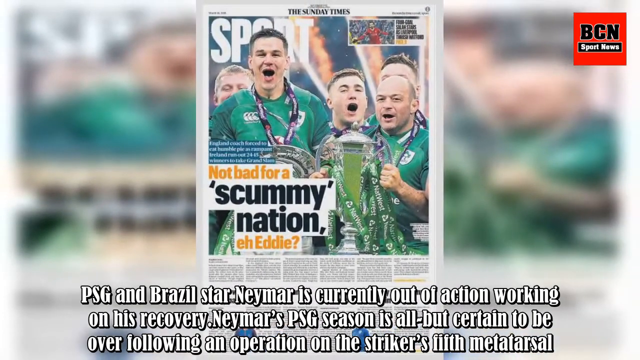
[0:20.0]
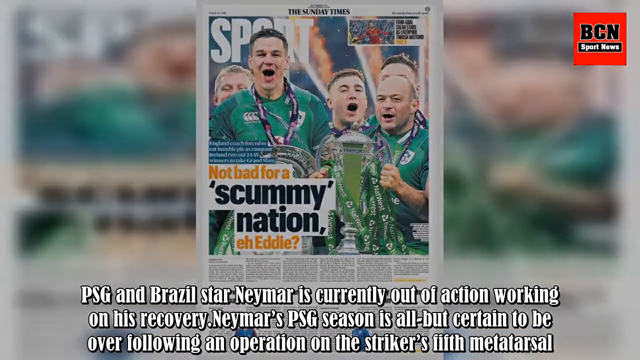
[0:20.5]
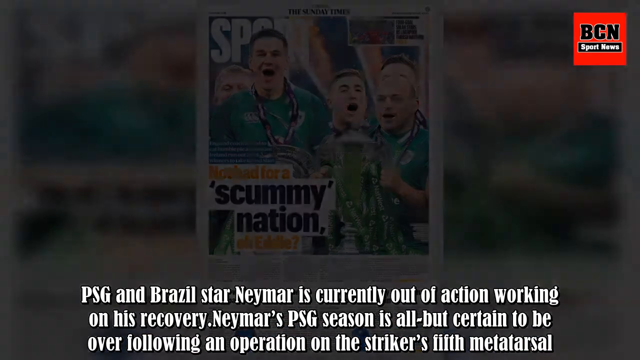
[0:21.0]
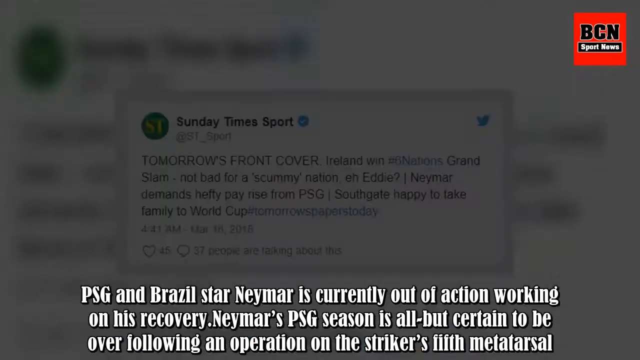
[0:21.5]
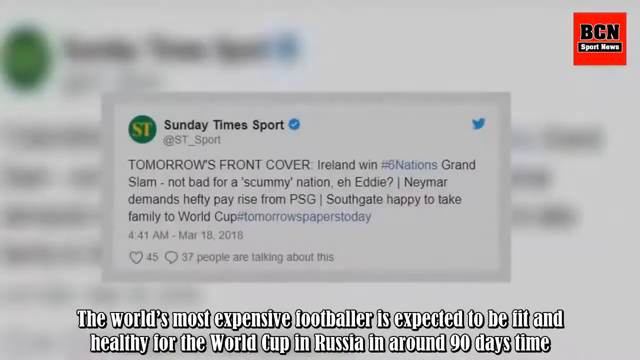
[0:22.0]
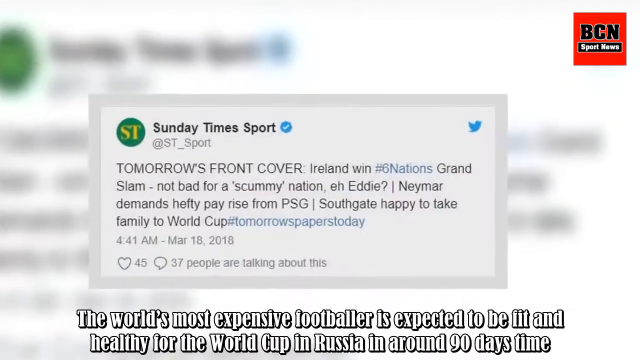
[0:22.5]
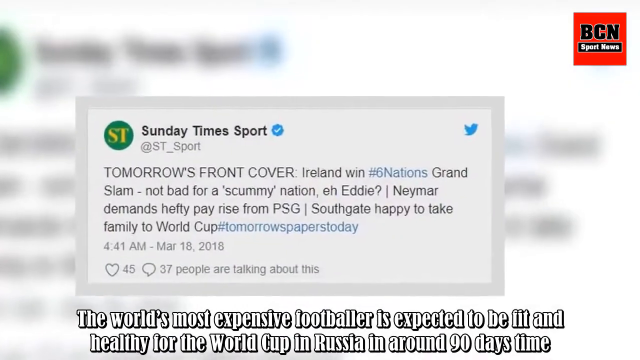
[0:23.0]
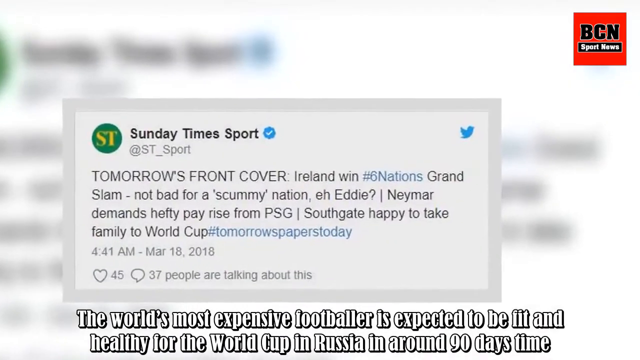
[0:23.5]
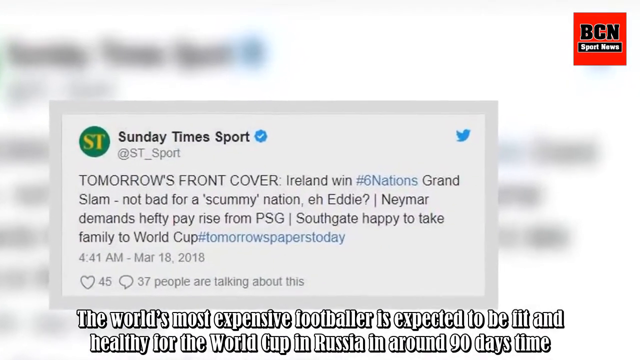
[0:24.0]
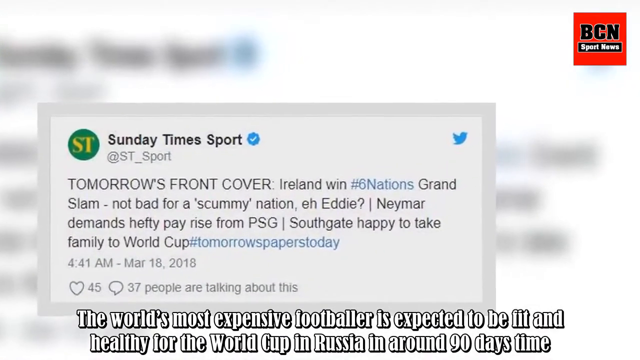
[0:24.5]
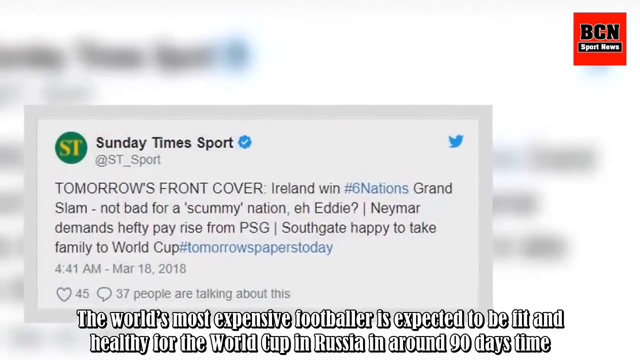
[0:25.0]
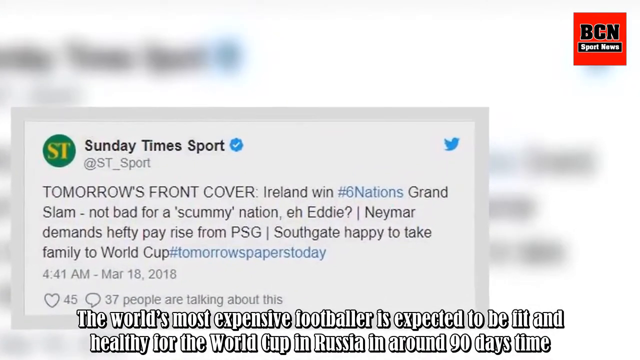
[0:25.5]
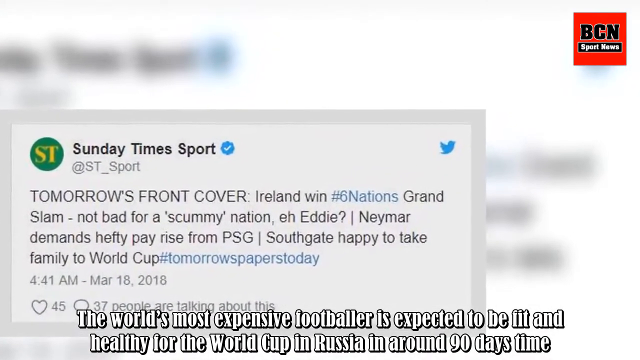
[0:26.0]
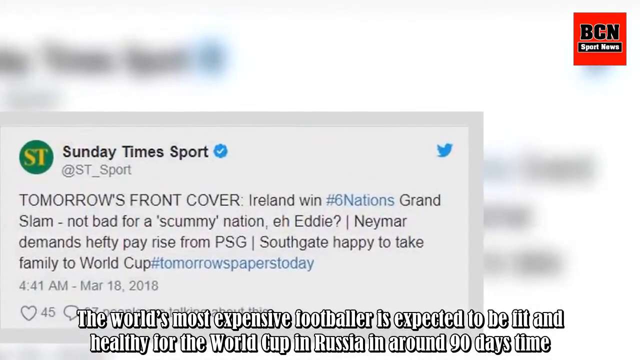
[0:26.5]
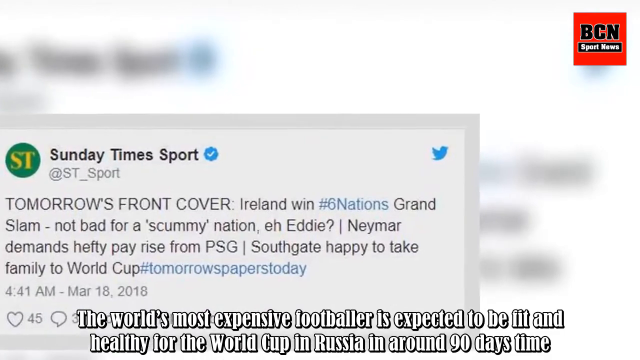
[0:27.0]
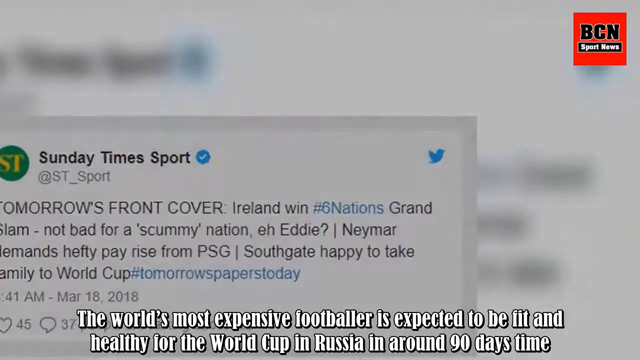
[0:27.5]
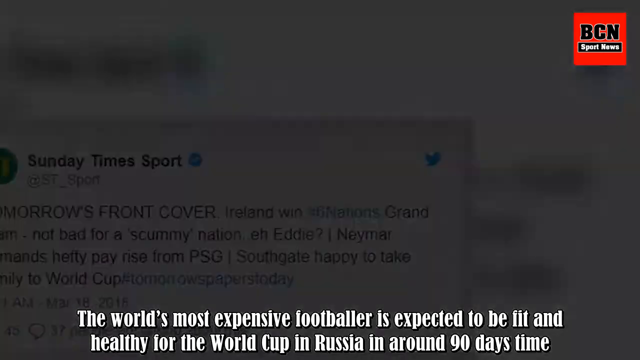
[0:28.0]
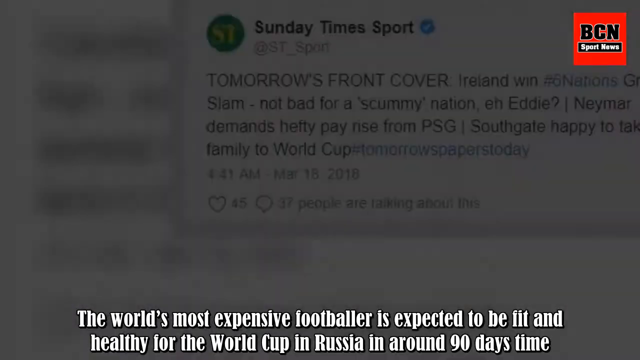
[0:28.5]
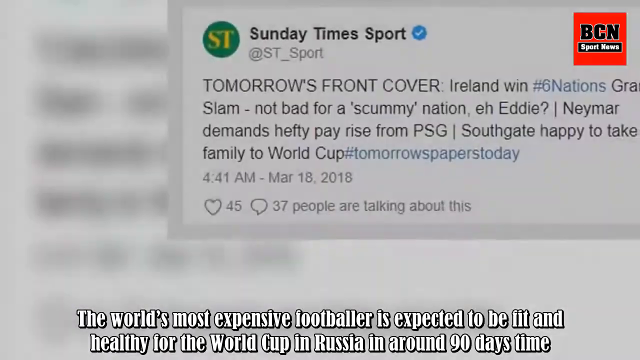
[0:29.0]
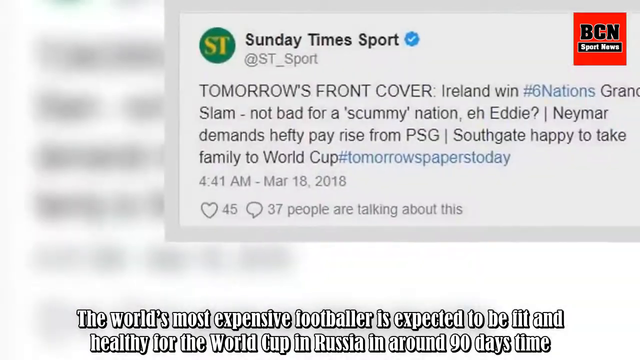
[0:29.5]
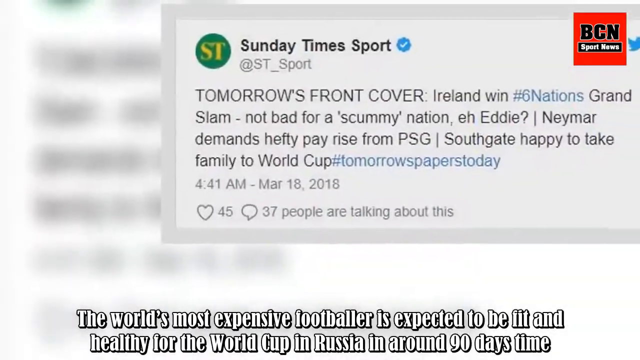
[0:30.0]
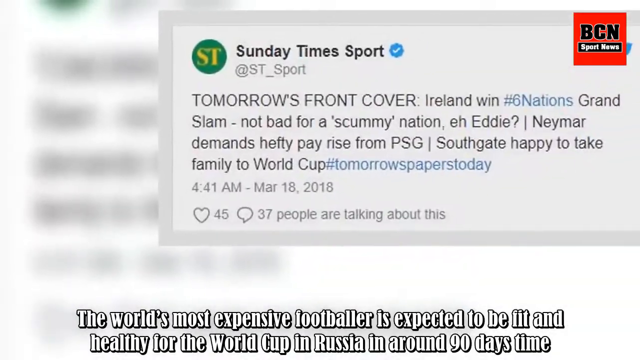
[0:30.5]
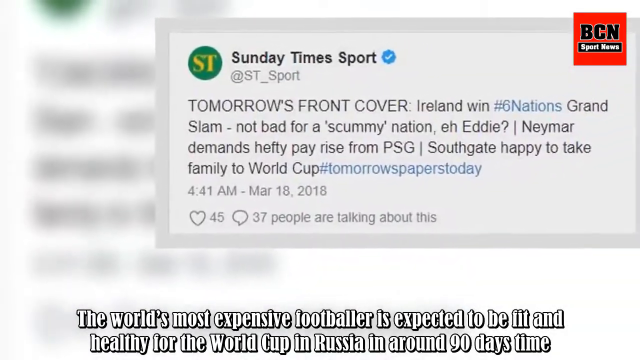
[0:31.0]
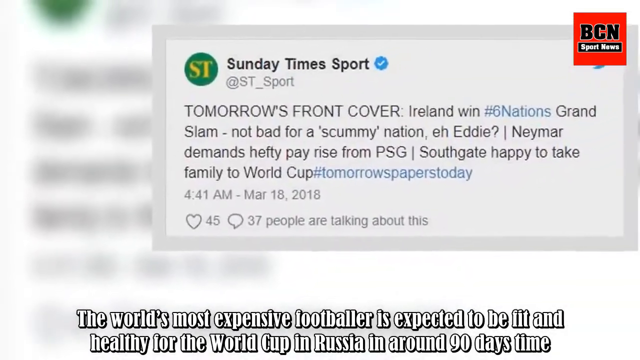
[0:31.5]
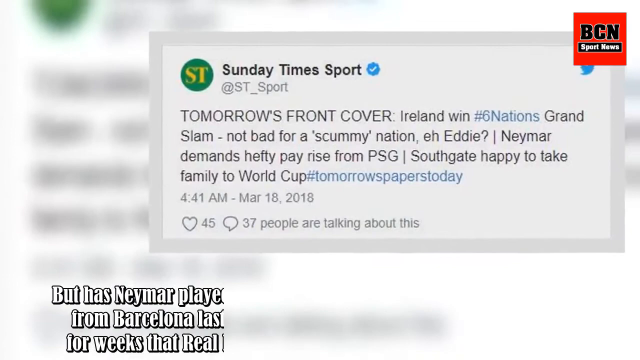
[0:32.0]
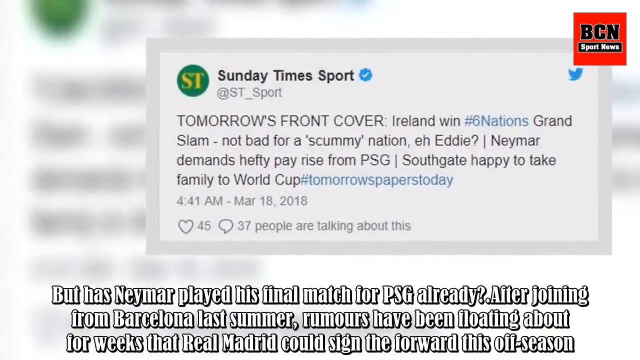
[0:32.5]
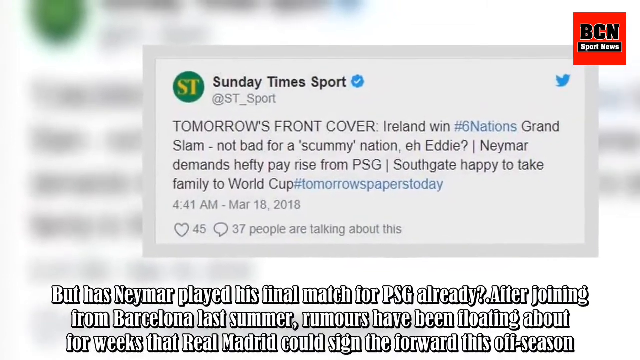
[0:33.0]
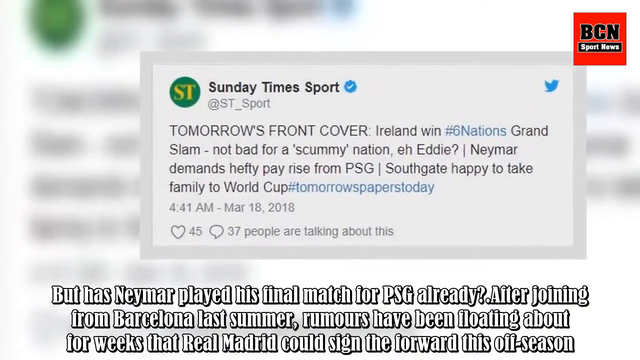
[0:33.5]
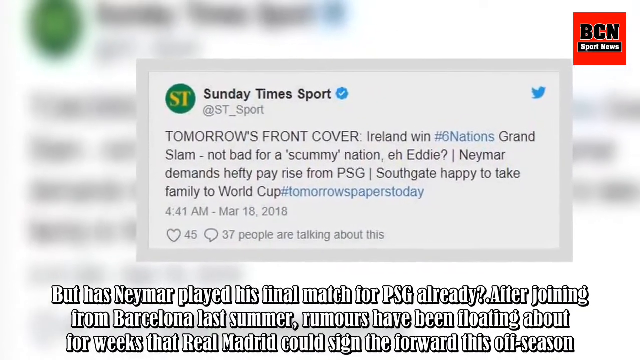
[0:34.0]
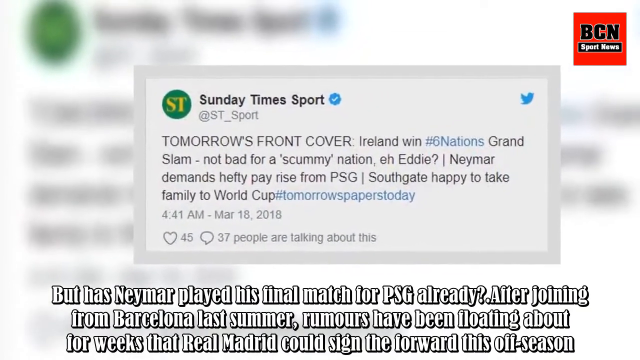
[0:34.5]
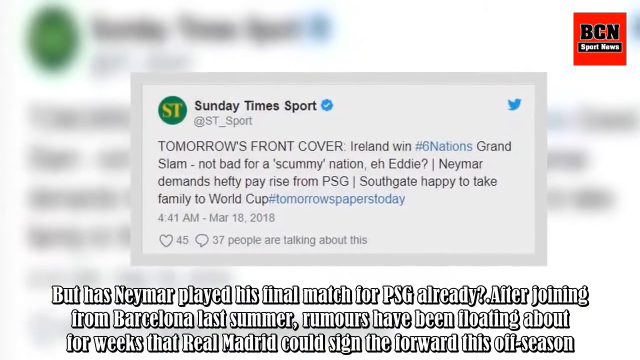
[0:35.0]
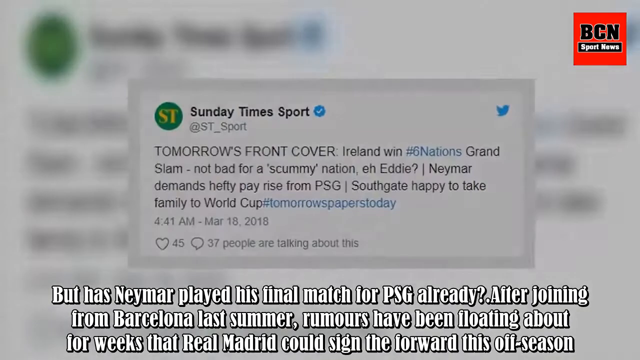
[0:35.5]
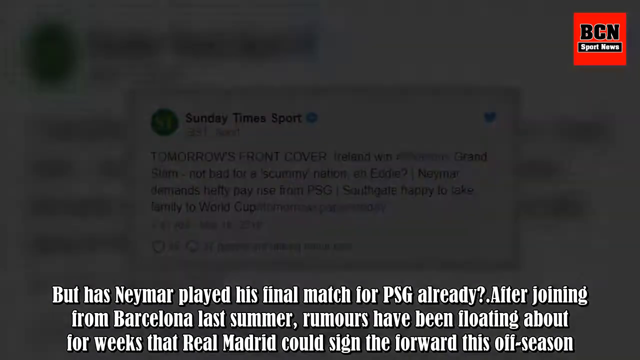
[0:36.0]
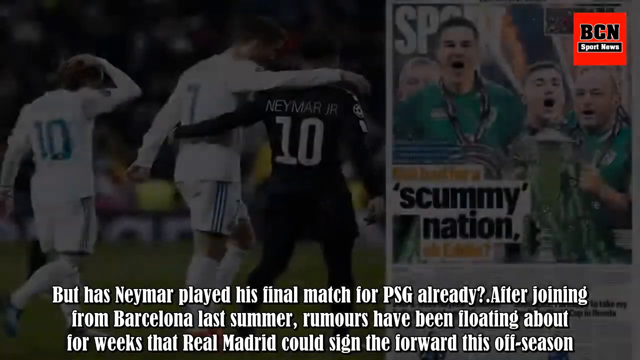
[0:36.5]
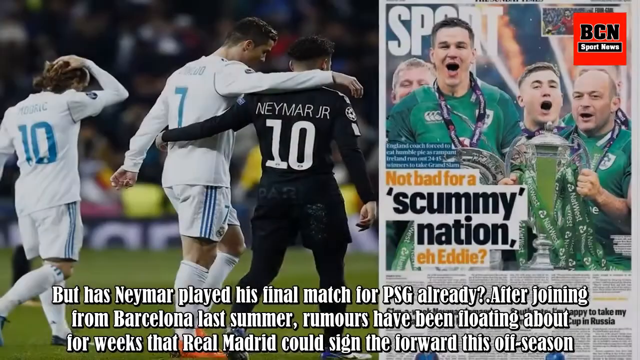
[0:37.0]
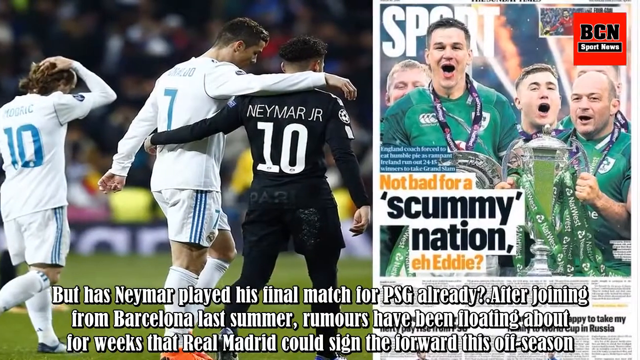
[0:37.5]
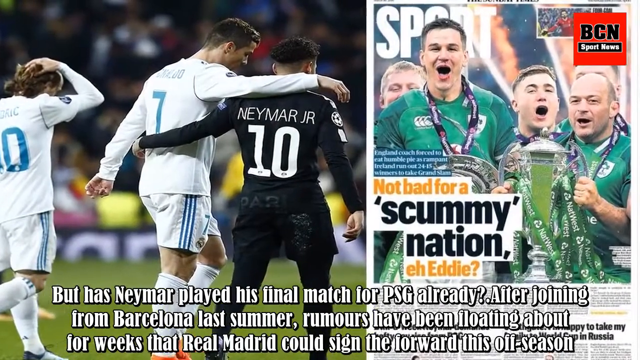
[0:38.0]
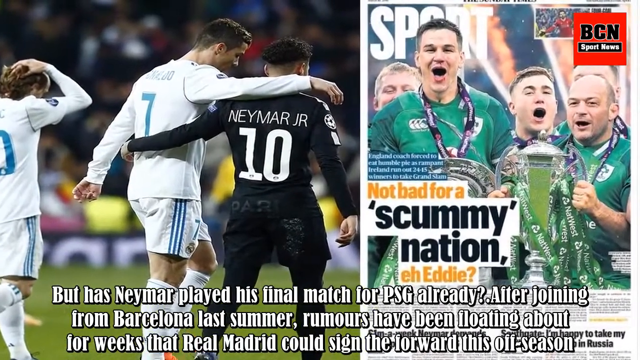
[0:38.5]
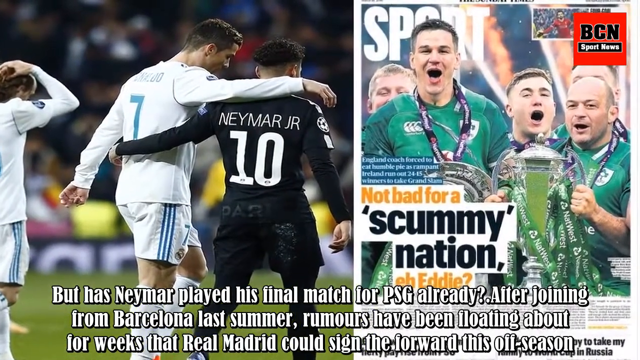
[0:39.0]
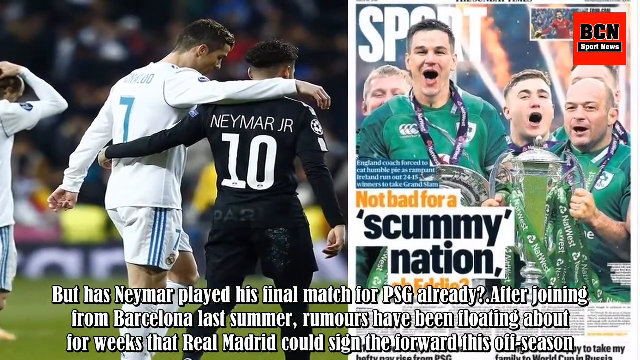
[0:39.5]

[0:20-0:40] A newspaper cover shows five players who have won a trophy; the trophy is large and silver, with a lot of green lanyards over it. The players wear green jerseys and smile at the camera with their mouths open. The headline says "not bad for a scummy nation". White text at the bottom of the screen reads: "PSG and Brazil star Neymar is currently out of action working on his recovery. Neymar's PSG season is all but certain to be over following an operation on the striker's fifth metatarsal." The video then moves to a tweet from the Sunday Times Sport that says "tomorrow's front cover, Ireland wins Six Nations Grand Slam, not bad for Scummy Nation eh eddie?"